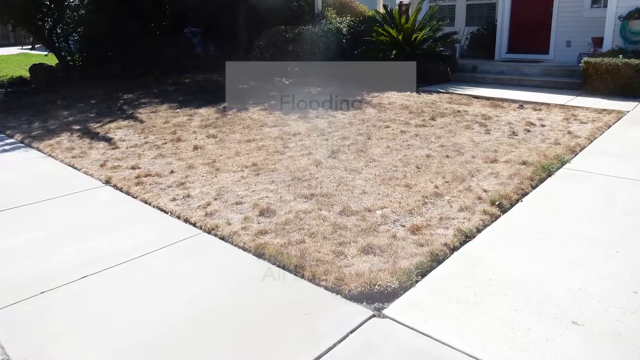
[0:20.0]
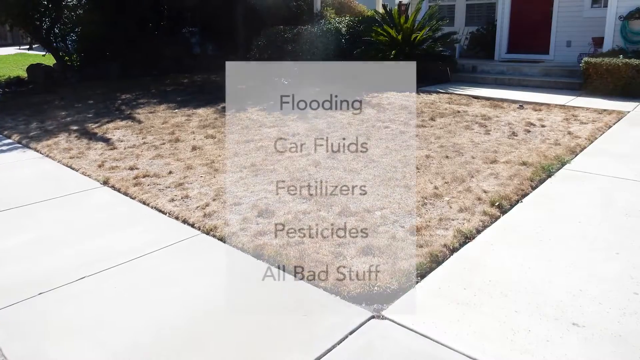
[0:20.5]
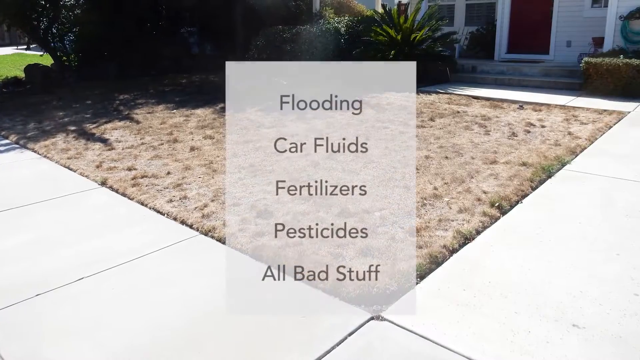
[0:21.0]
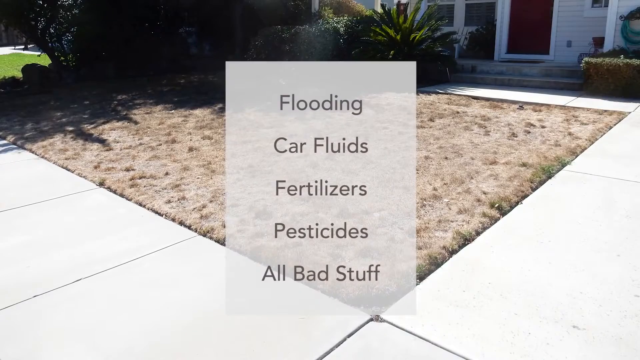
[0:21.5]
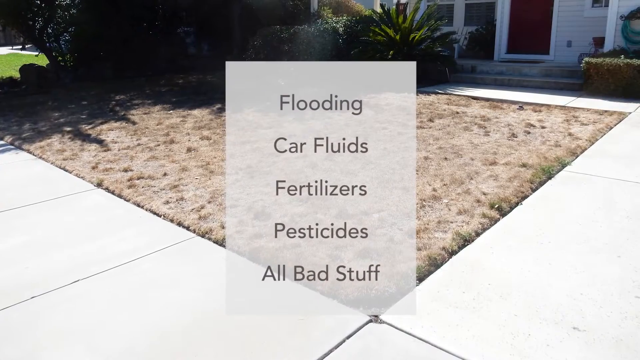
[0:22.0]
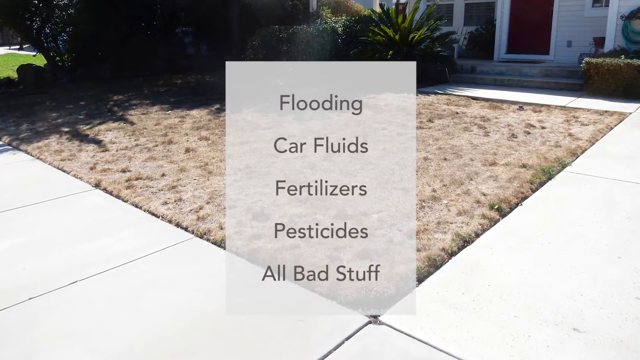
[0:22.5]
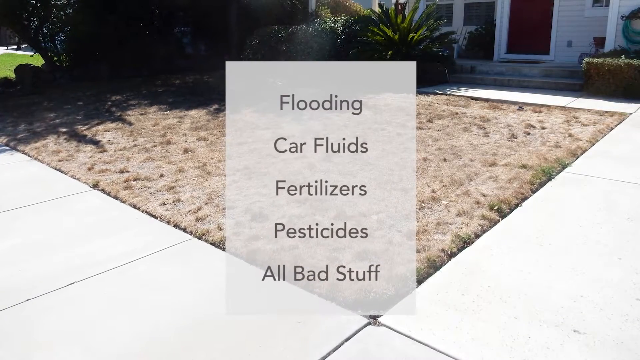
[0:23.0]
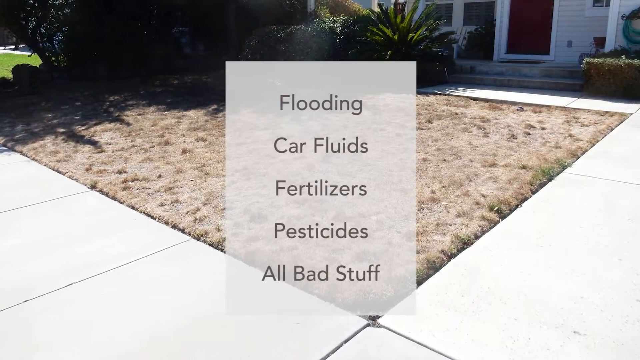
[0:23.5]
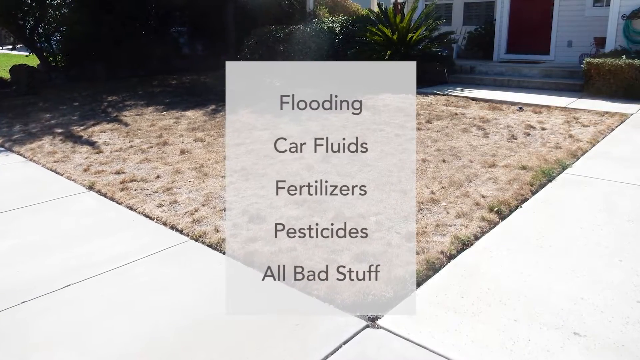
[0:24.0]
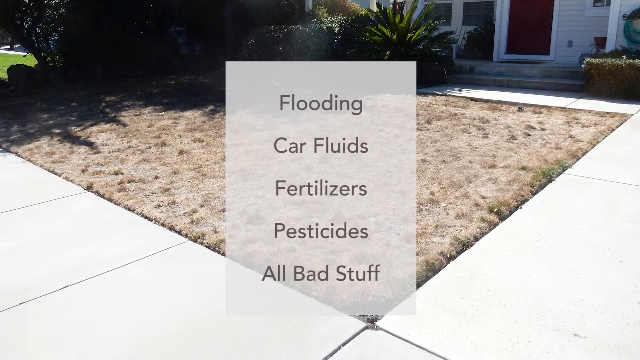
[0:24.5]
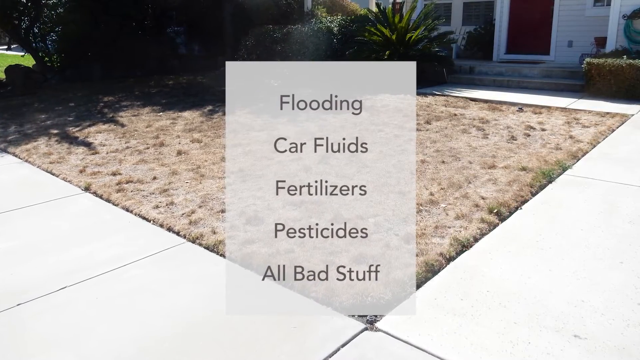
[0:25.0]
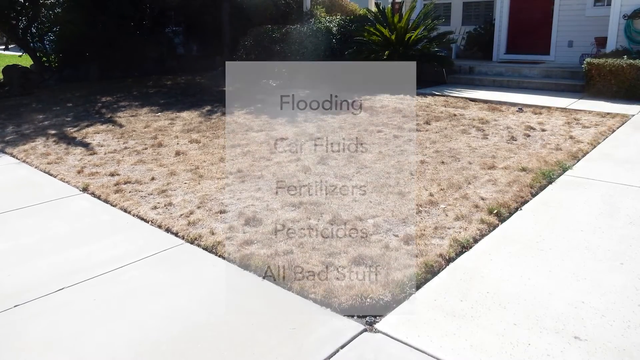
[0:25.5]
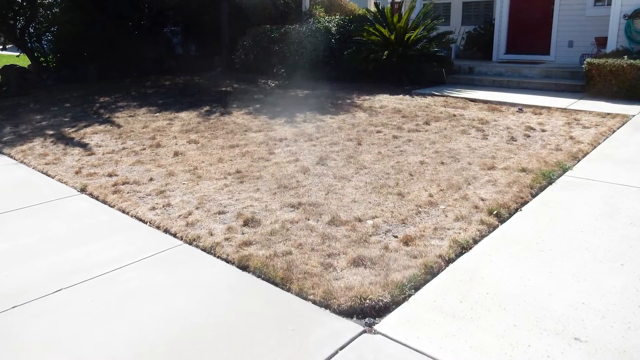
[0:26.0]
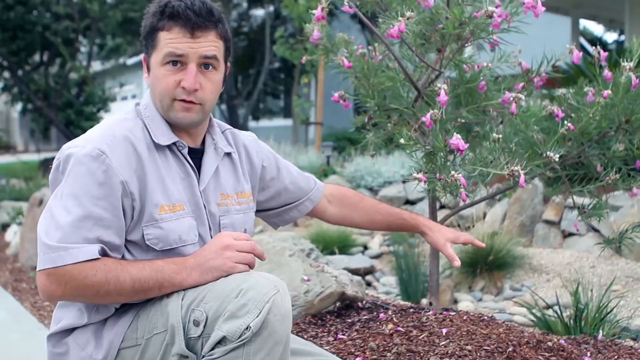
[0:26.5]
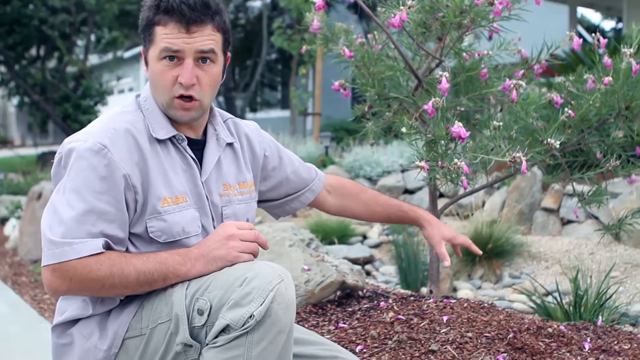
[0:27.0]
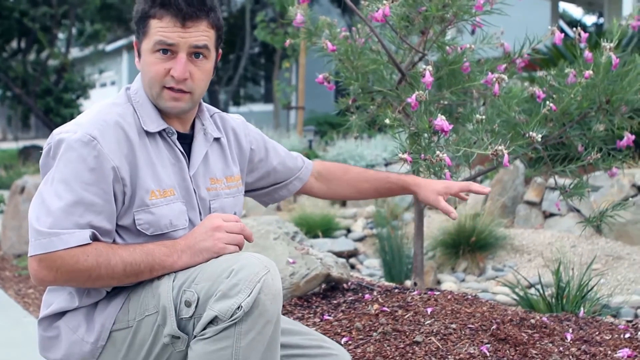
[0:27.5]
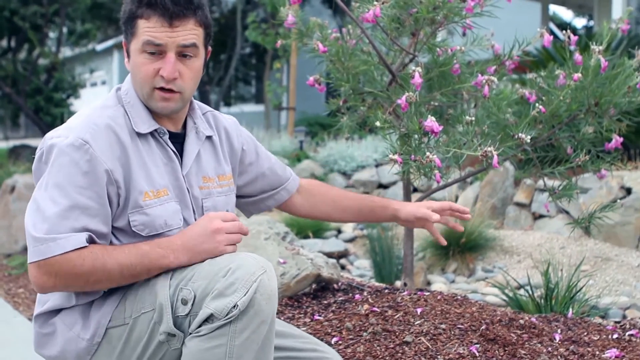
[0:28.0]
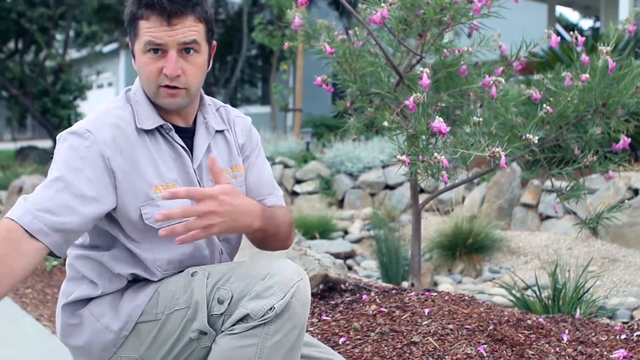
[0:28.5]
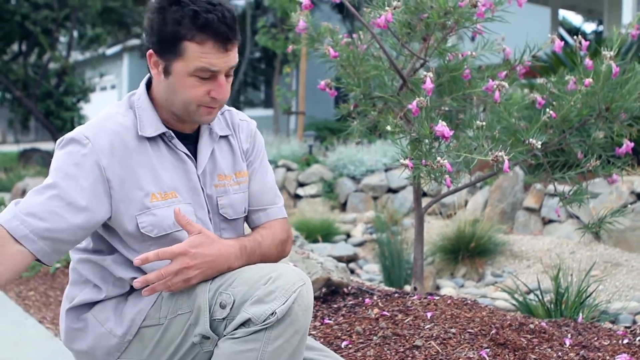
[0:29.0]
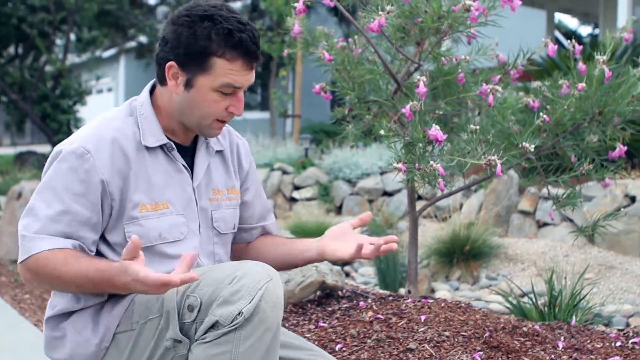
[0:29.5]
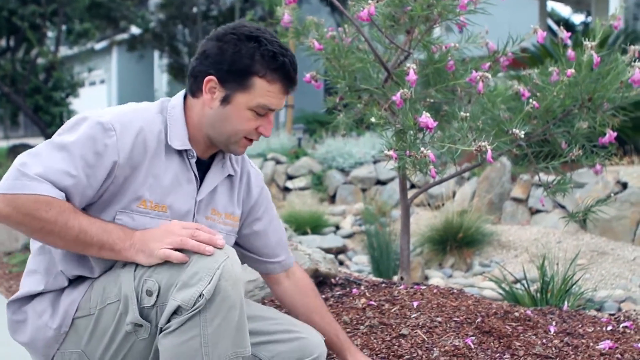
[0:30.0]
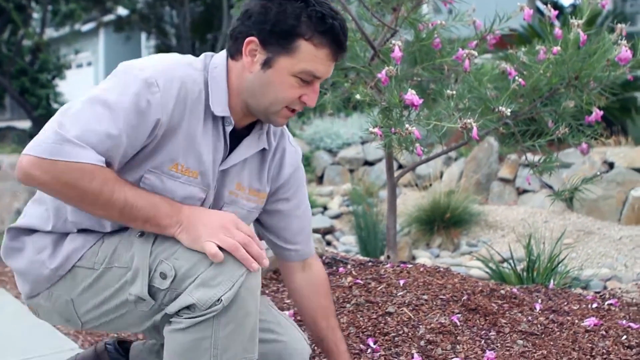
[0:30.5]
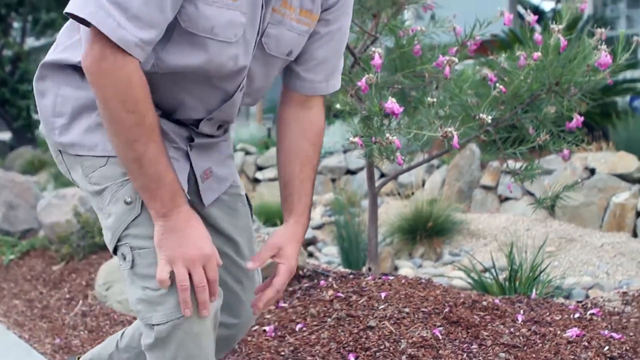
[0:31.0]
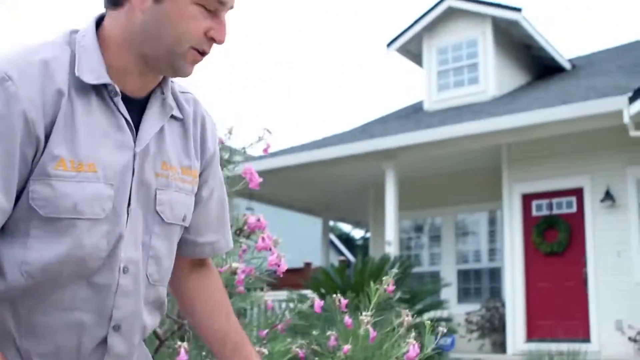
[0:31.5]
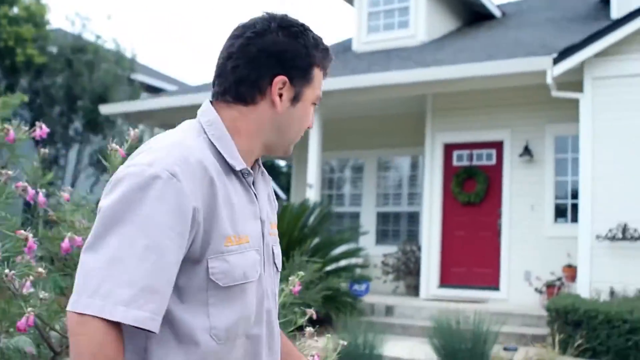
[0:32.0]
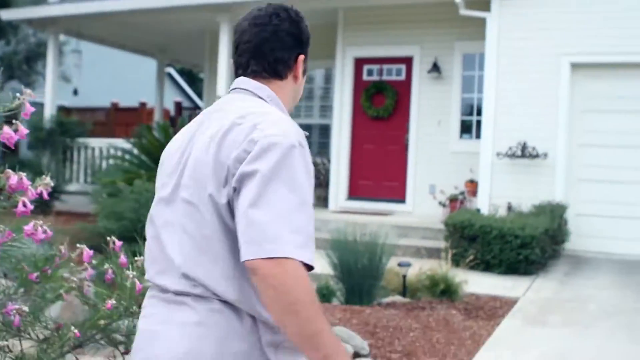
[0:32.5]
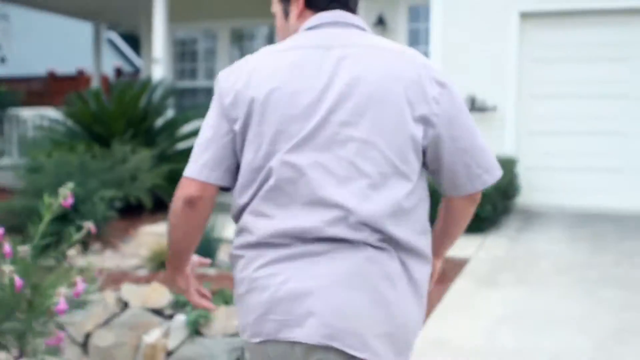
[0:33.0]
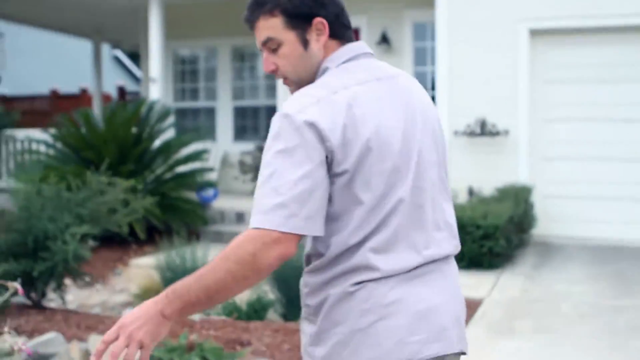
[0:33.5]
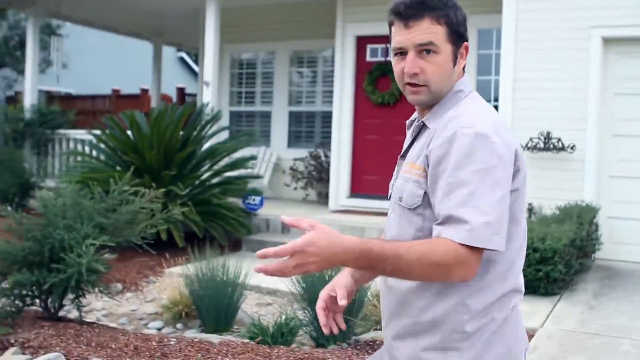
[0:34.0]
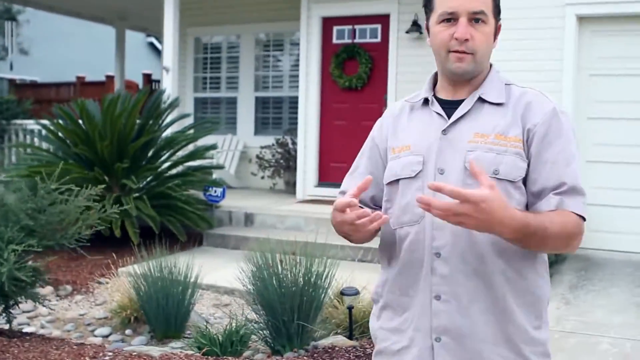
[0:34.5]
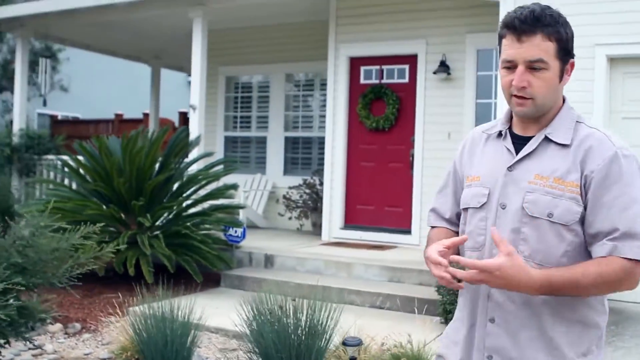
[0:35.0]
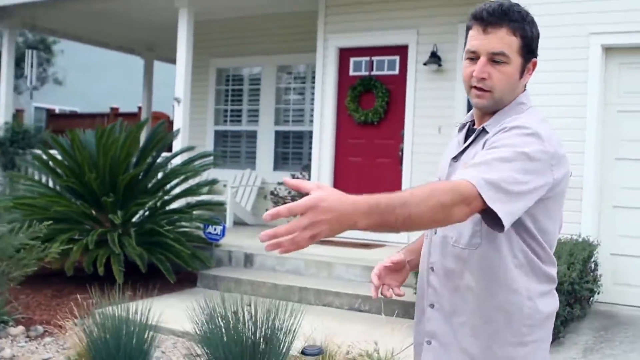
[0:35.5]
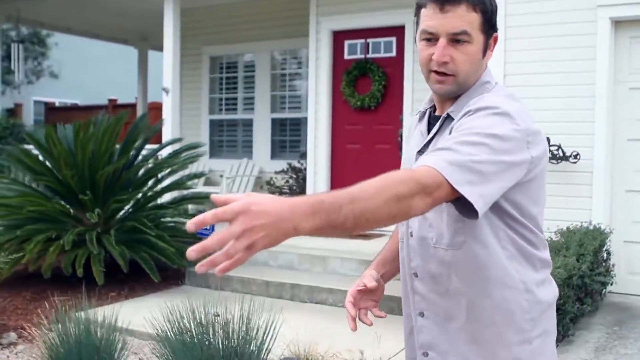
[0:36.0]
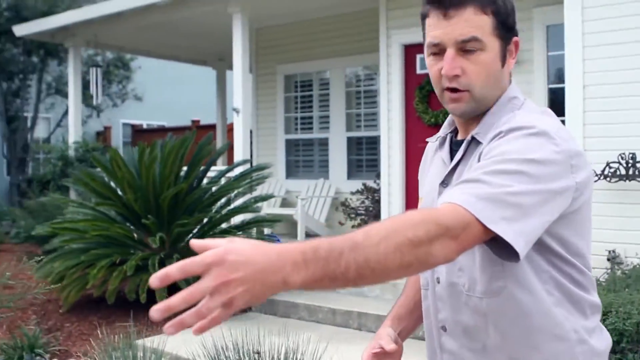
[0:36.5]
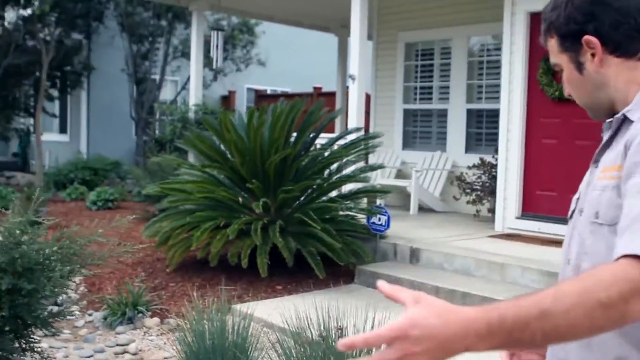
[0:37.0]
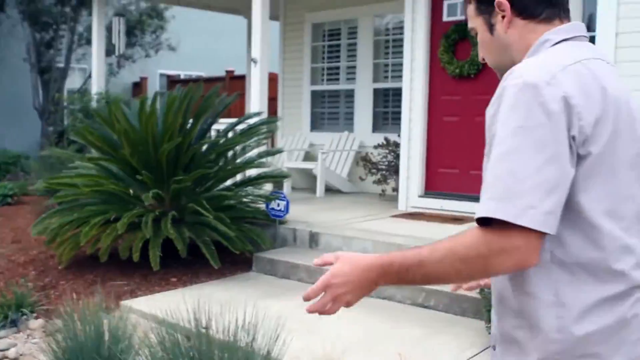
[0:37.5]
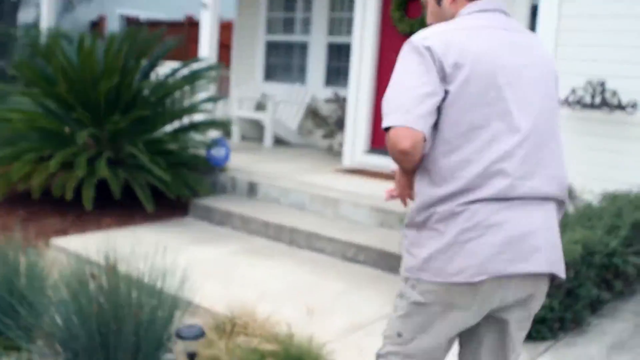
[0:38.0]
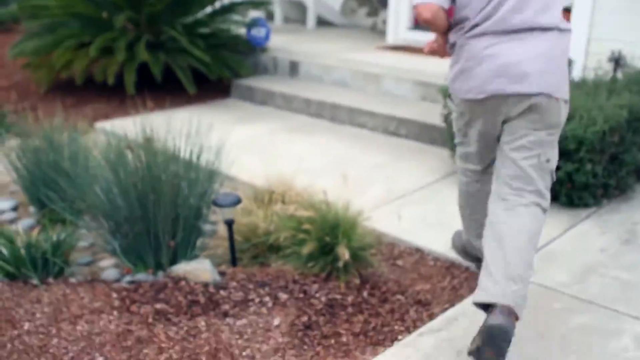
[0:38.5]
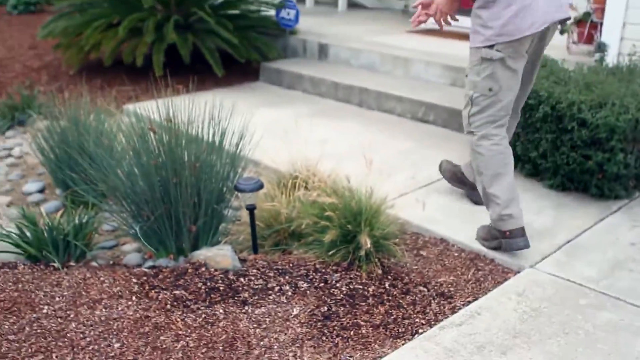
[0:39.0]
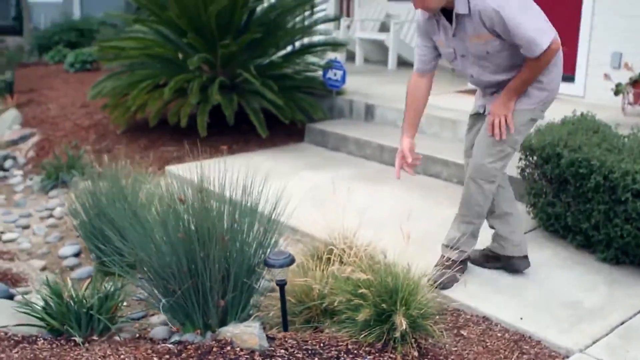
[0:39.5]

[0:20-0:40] A garden bed is shown outdoors. Text in black font on a white background reads "flooding, car fluids, fertilizers, pesticides, all bad stuff." A young man, Ellen, wears a gray shirt with logos on both the right and left sides of the chest, a black t-shirt underneath, cargo pants and black shoes. He seems to be in his early 30s and has a light complexion and short black hair. He shows the different plants at his house; some are dark green and others light green, and his white house is in the background. Some of the trees and plants have pink petals hanging from them, while others are neatly trimmed. Some trees are long, some are short, some are wide, and others are small and narrow.